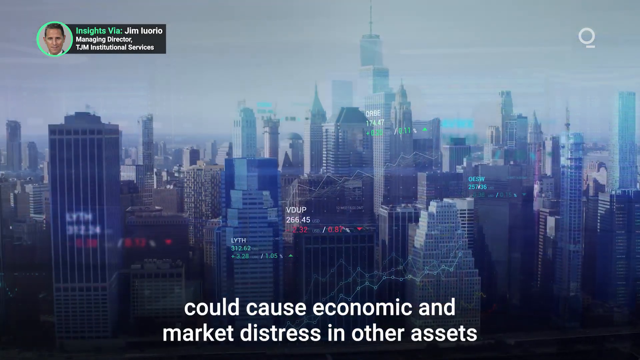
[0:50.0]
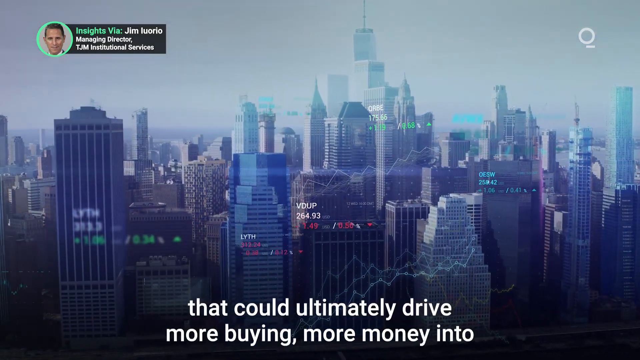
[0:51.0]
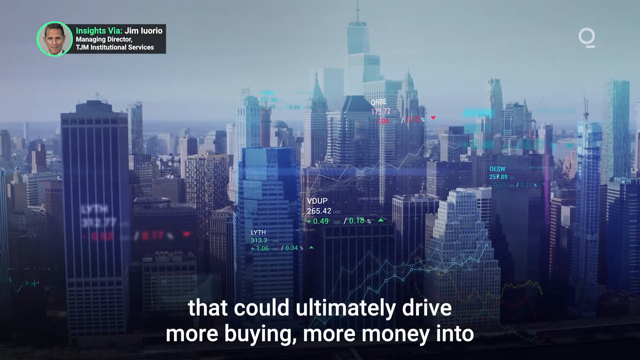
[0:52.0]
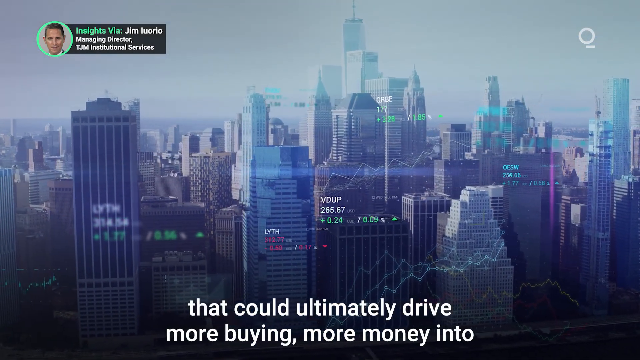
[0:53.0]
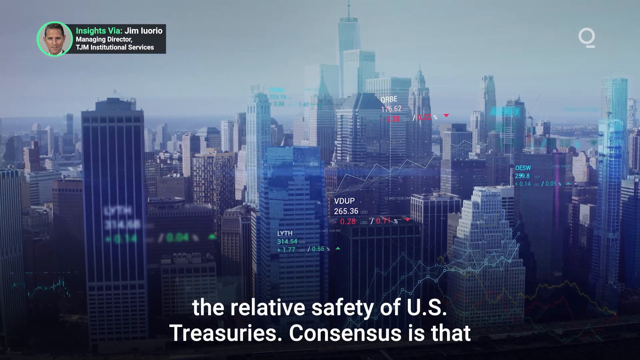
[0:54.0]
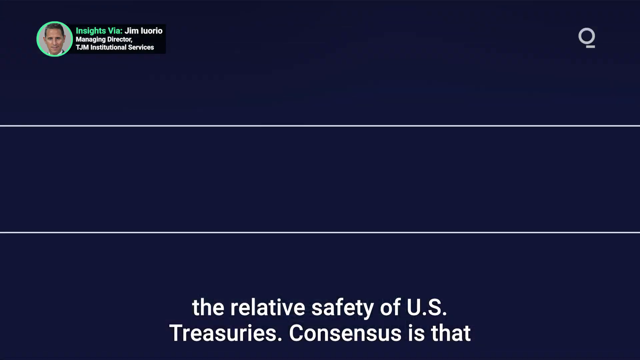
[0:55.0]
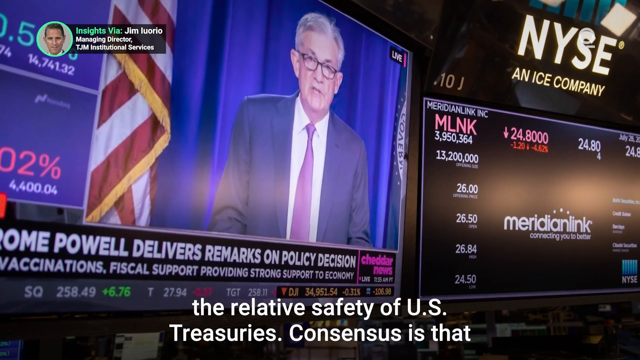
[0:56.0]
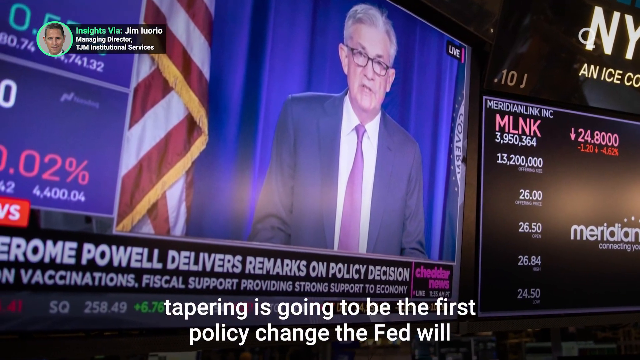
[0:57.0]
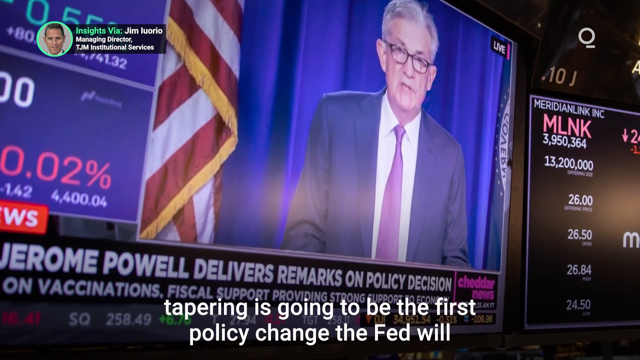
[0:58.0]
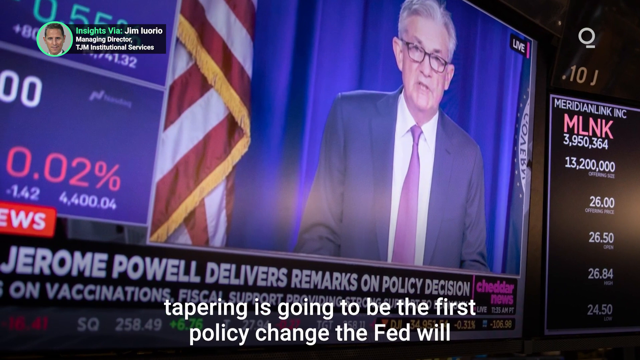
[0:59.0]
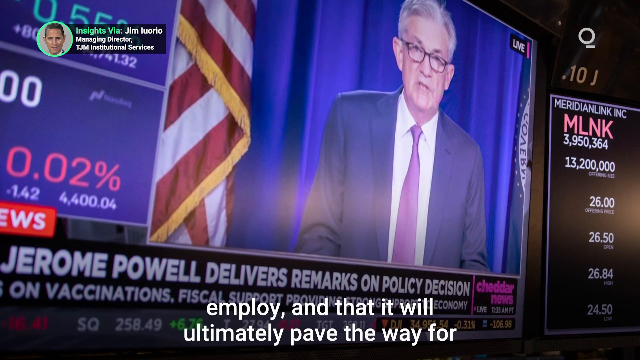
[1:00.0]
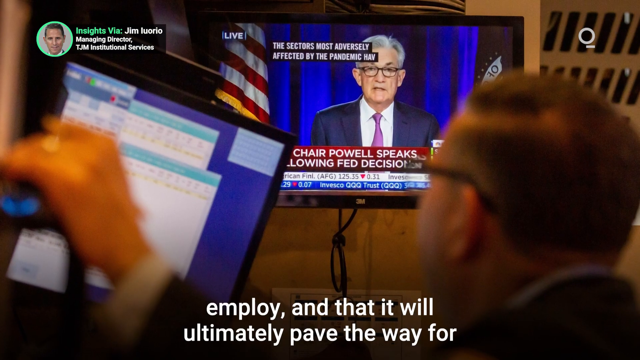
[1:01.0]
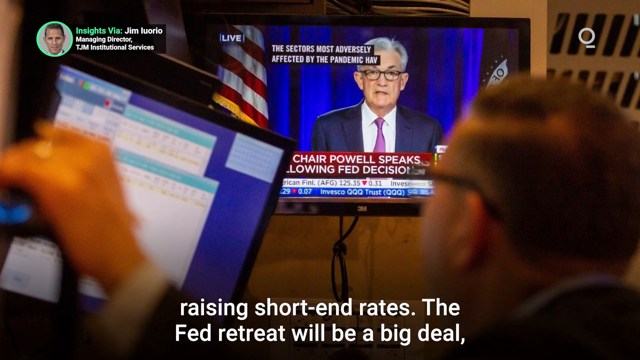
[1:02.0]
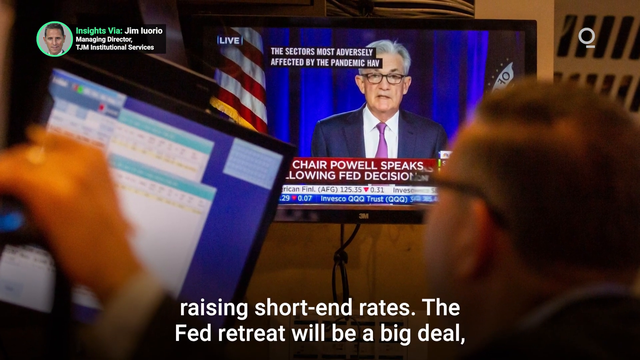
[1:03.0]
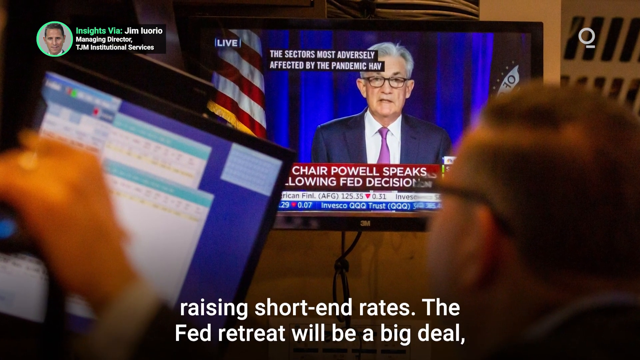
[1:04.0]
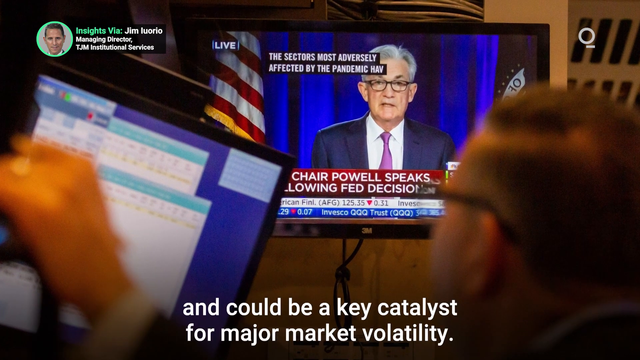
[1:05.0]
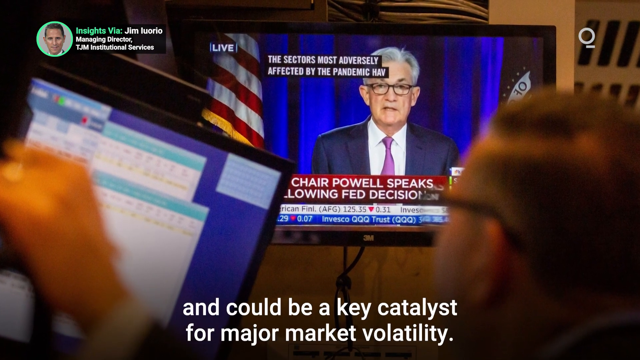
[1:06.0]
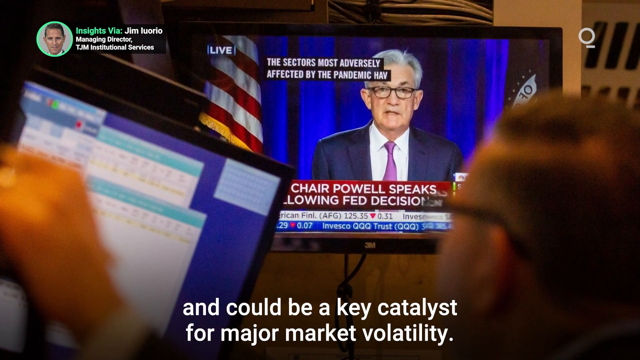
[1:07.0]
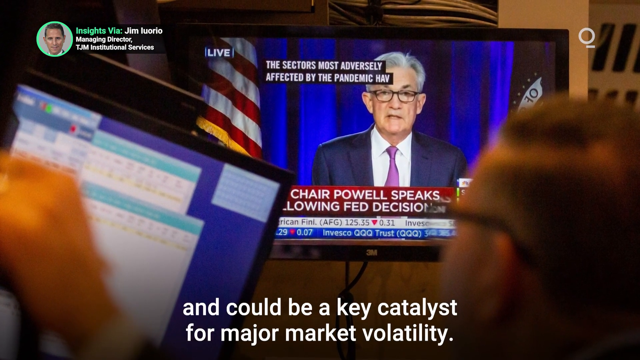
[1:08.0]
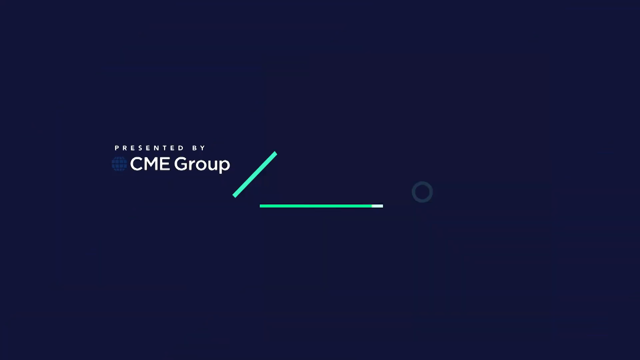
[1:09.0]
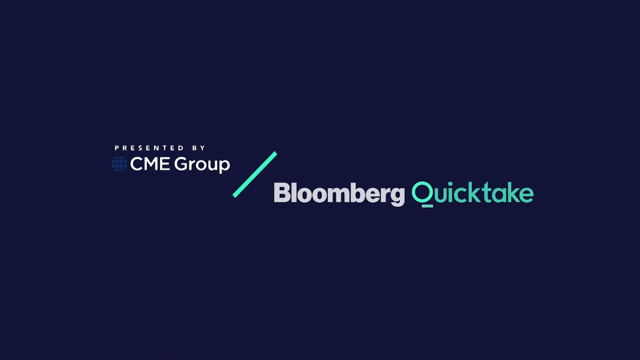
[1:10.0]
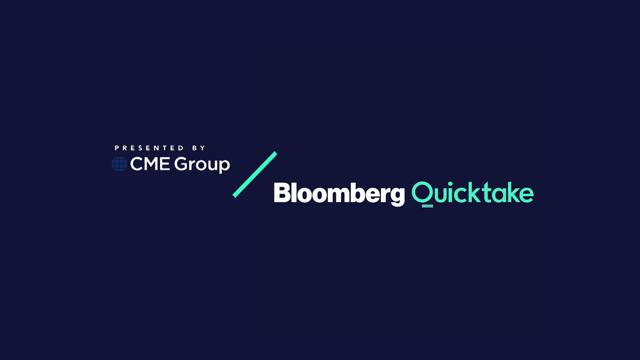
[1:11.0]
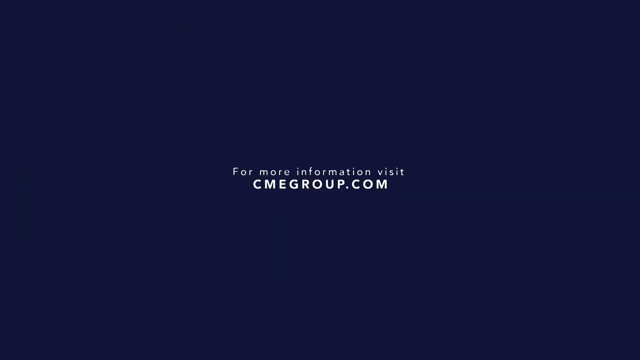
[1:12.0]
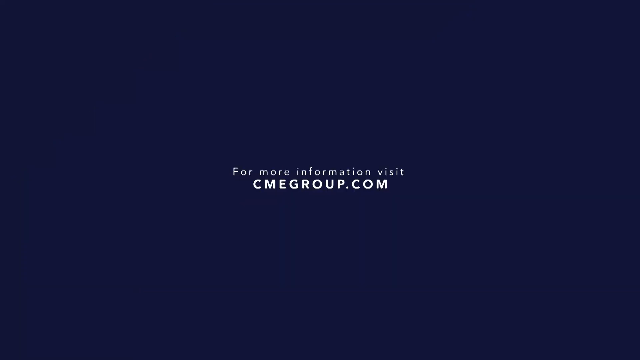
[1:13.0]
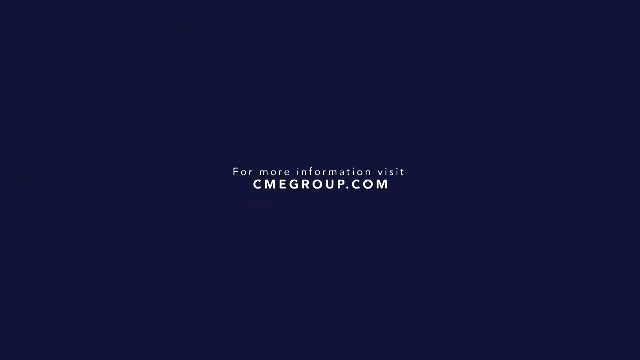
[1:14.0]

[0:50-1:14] A city skyline appears, probably New York or Chicago. The scene switches to two men watching a different newscast featuring Jerome Powell, the Fed chairman. Text reads "the relative safety of US Treasuries Consensus is that tapering is going to be the first policy change the Fed will employ and that will ultimately pave the way for raising short end rates the federal retreat will be a big deal and could be a key catalyst for major market volatility." A light blue screen then swipes through the whole screen like a shutter, from the top left to the lower right, and the logos for the CME group and Bloomberg Quicktake come up. Finally, a screen reads "For more information see CMEGROUP.COM."